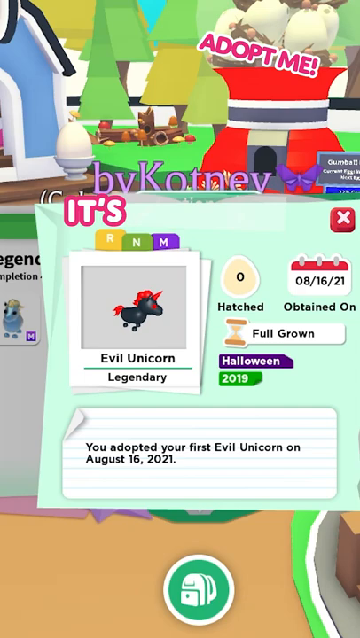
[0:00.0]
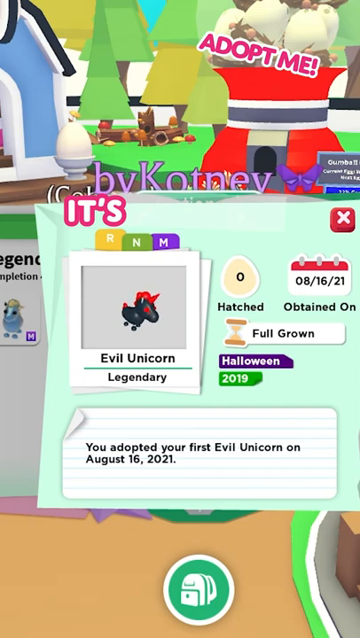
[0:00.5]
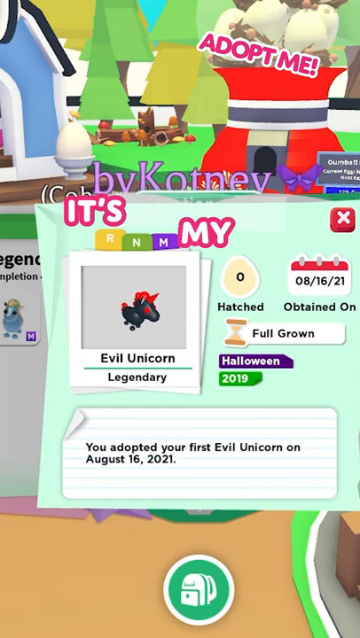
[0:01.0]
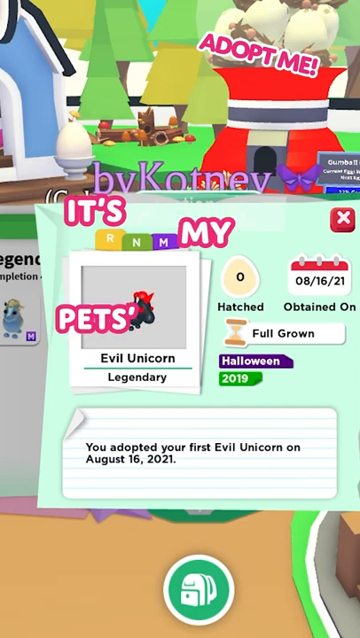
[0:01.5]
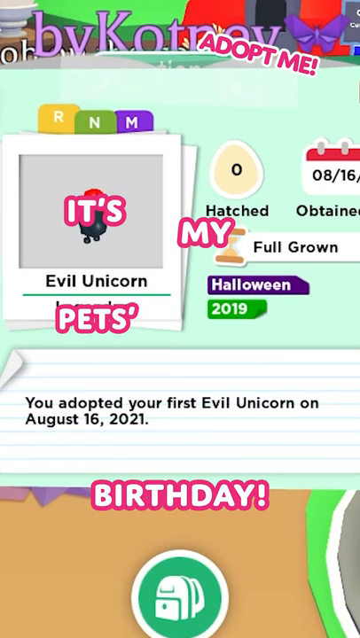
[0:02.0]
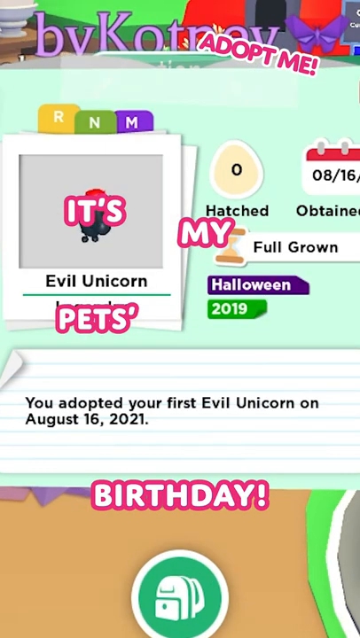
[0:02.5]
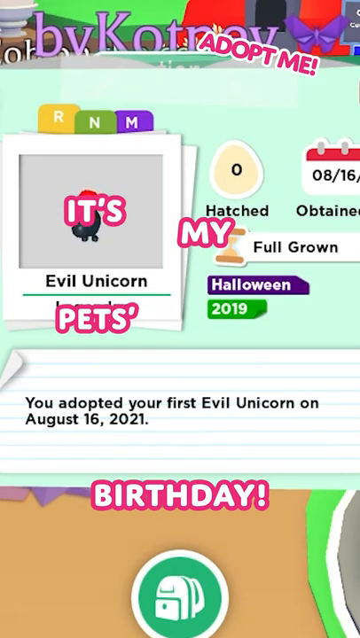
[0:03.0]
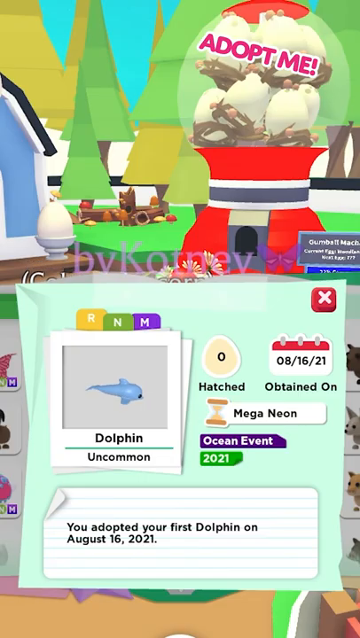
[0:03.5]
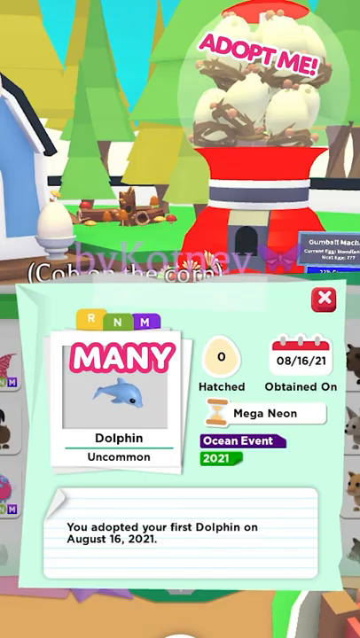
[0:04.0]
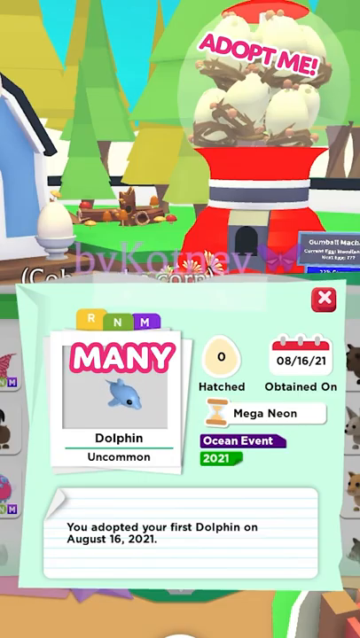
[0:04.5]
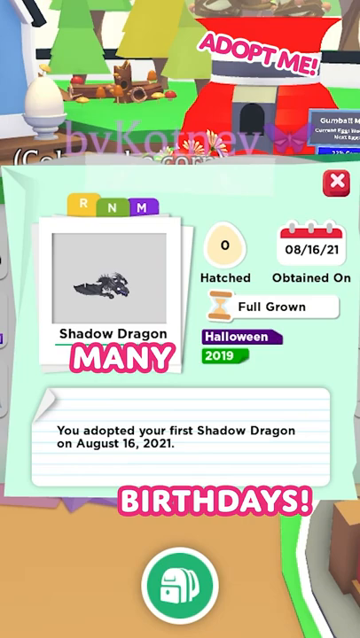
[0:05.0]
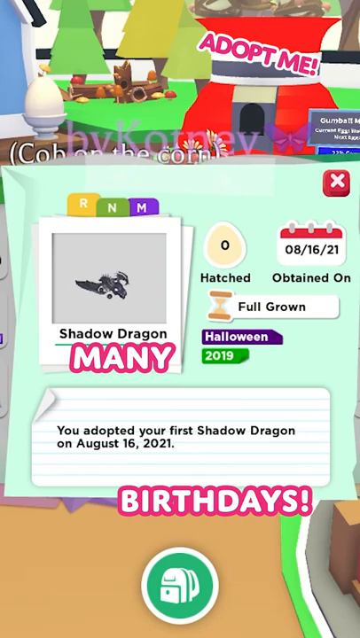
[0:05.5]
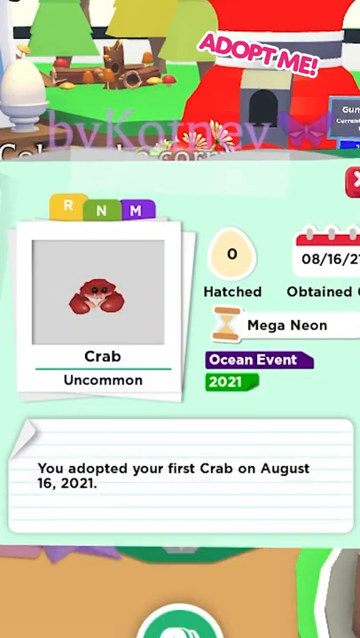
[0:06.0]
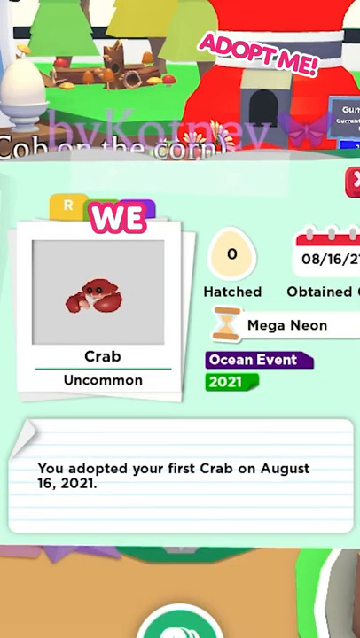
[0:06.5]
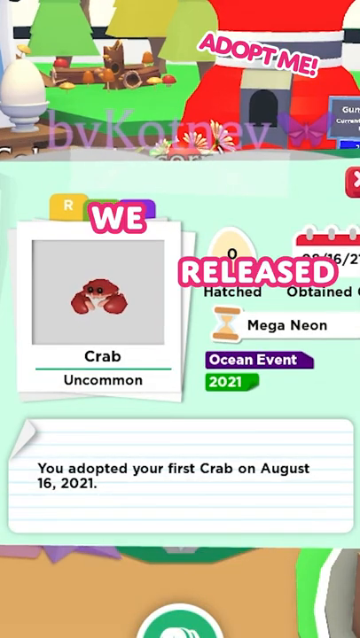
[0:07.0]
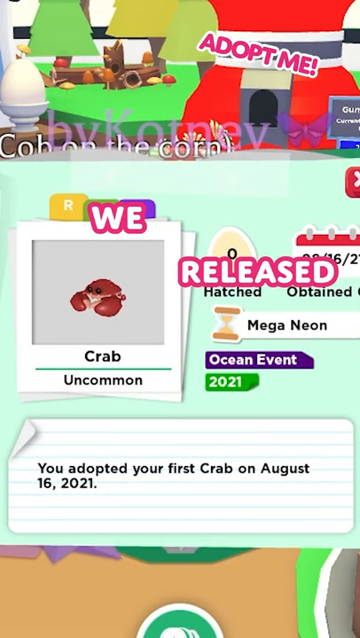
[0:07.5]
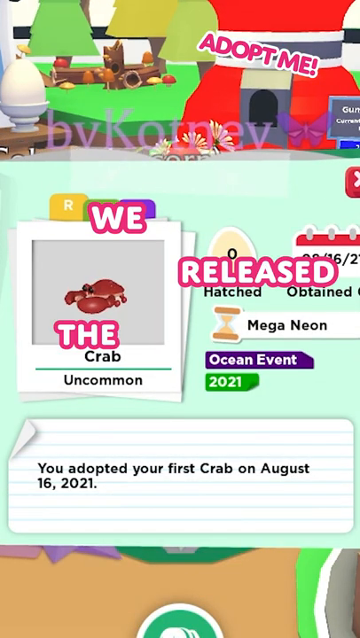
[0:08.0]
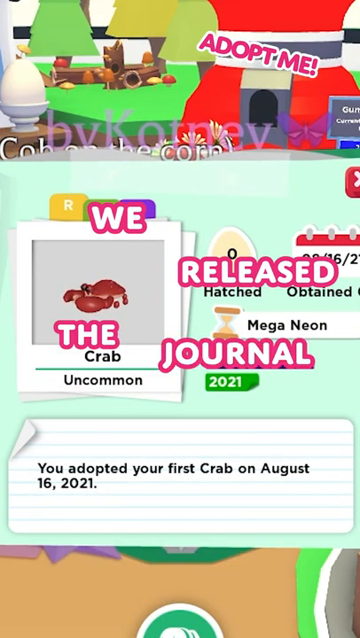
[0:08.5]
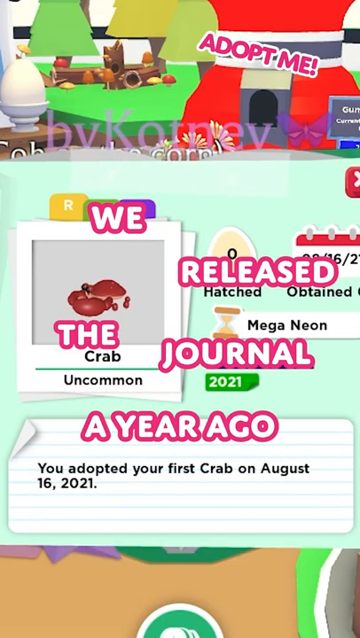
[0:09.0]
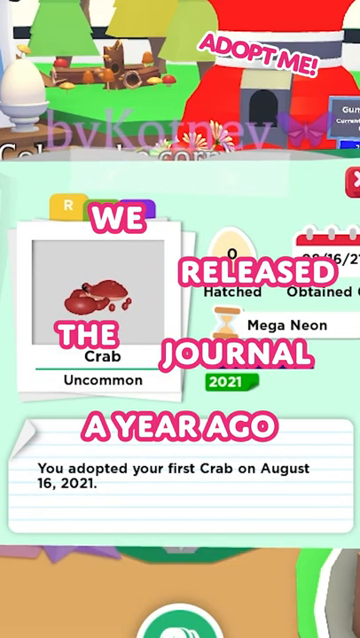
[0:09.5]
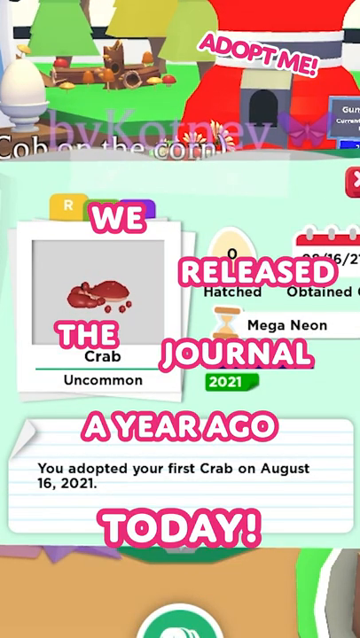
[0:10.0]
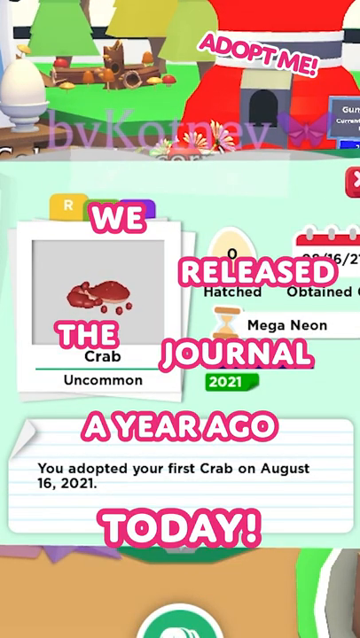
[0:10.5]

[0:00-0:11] The video is about pets' birthdays and appears to be from a Roblox game. It starts with pictures and text that is really small and hard to read. The pictures look like Polaroids of seemingly random pets: a crab, what looks like a little weird pony that is black with orange hair, and a dolphin. Labels on the pictures include "crab" and "uncommon", "evil unicorn", "dolphin" and "uncommon", and "shadow dragon", and on one side there is text reading "mega neon". The pictures have dates on them and the word "hatched", with the year 2021, and one of them looks like an egg. One date appears to be in August 2021, for the first crab adopted. All of this is encased in a teal color that is more green than blue. Beyond that is a background that looks like a giant bubblegum machine.